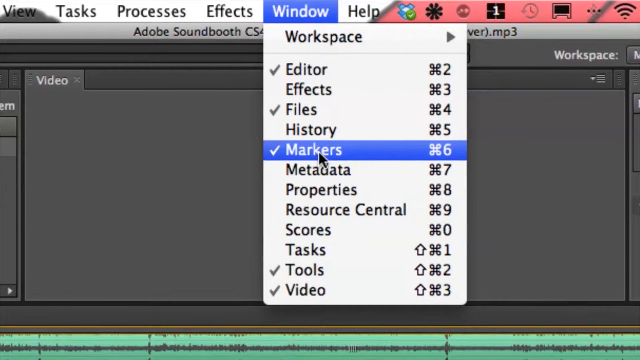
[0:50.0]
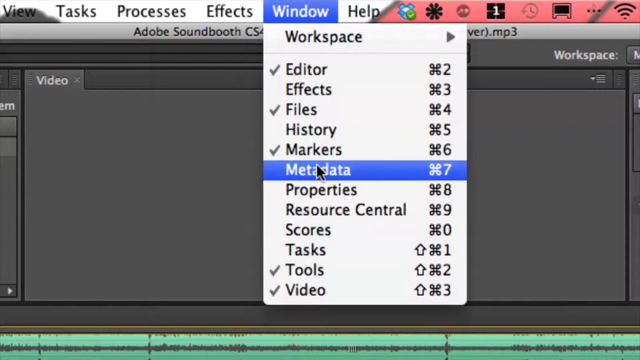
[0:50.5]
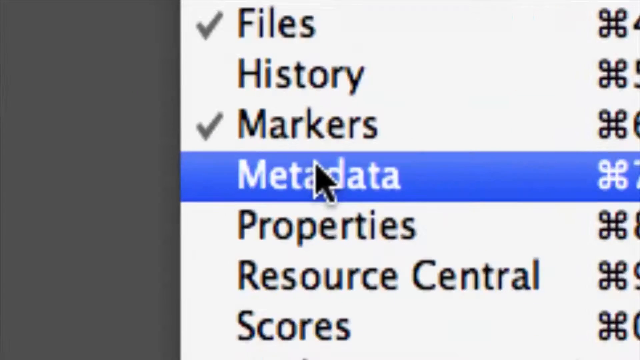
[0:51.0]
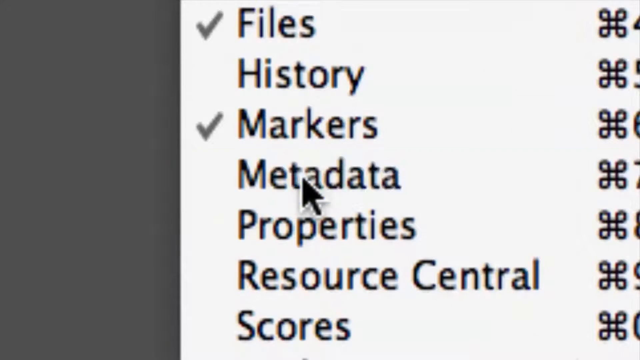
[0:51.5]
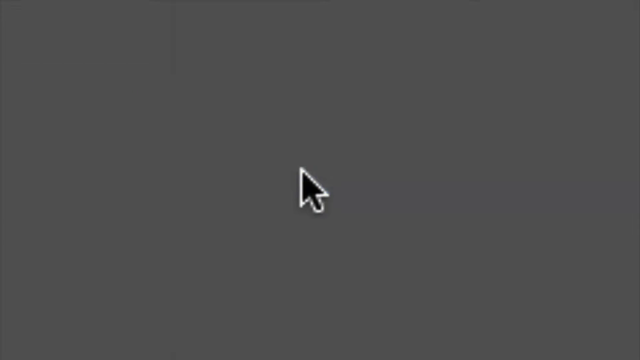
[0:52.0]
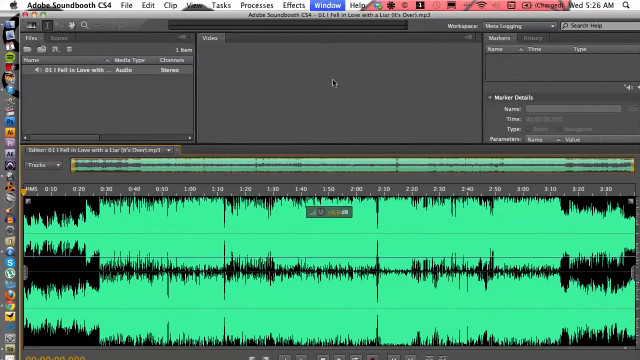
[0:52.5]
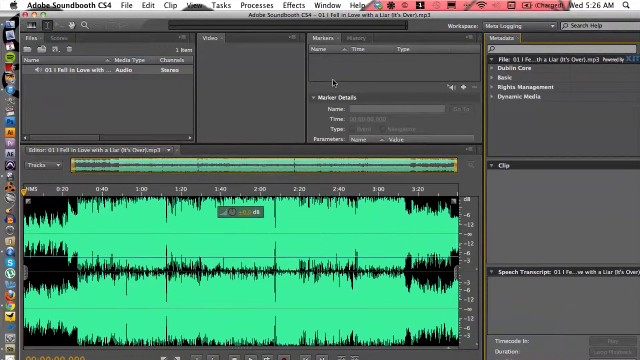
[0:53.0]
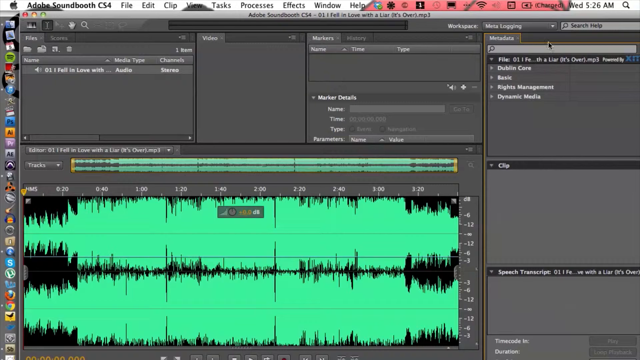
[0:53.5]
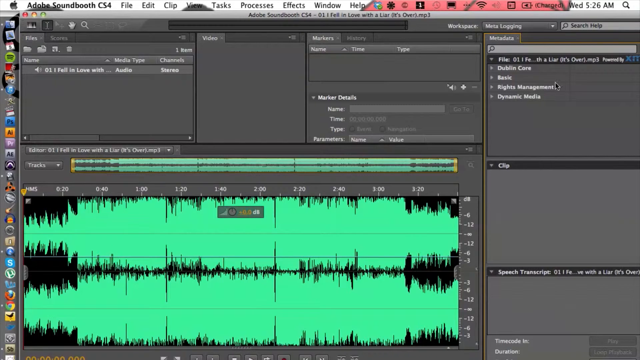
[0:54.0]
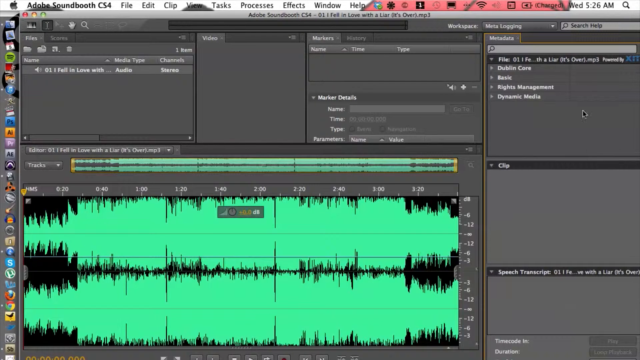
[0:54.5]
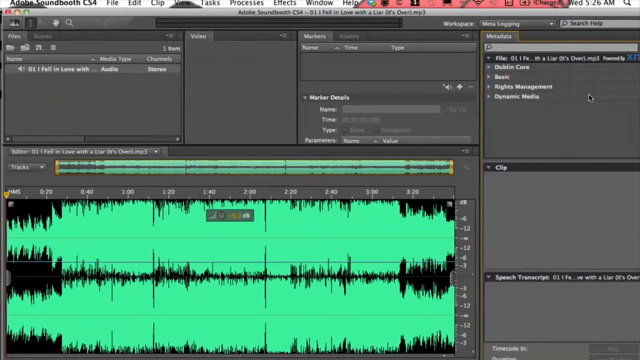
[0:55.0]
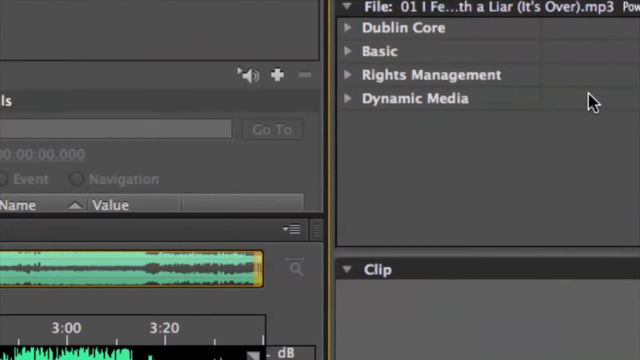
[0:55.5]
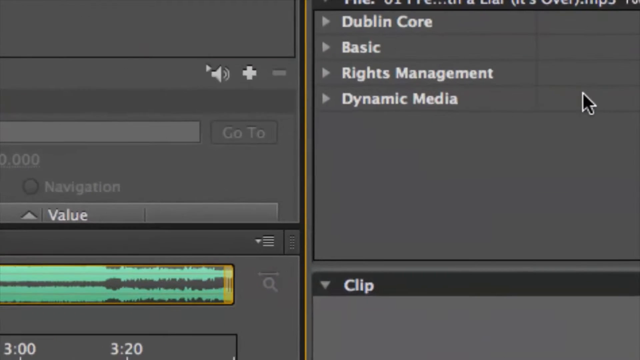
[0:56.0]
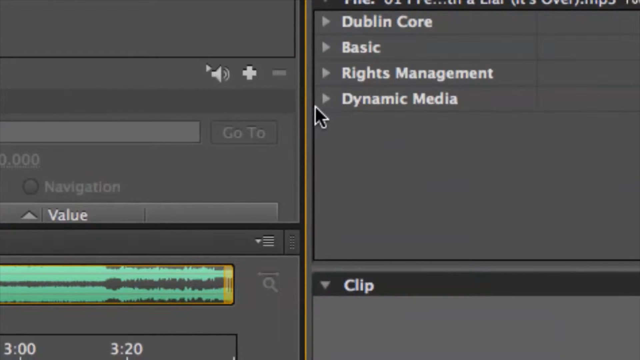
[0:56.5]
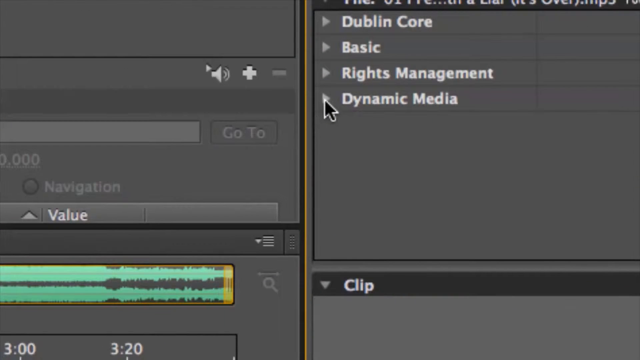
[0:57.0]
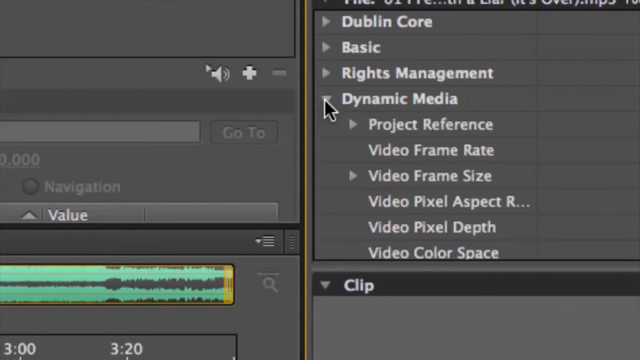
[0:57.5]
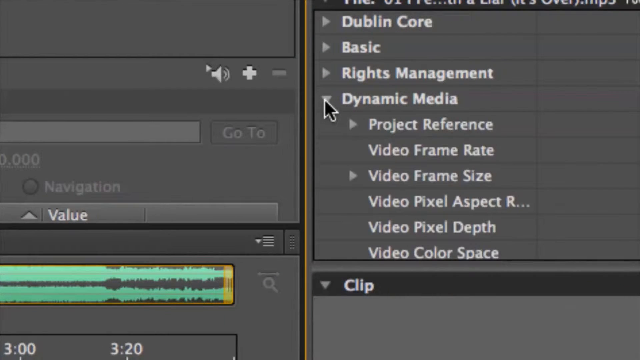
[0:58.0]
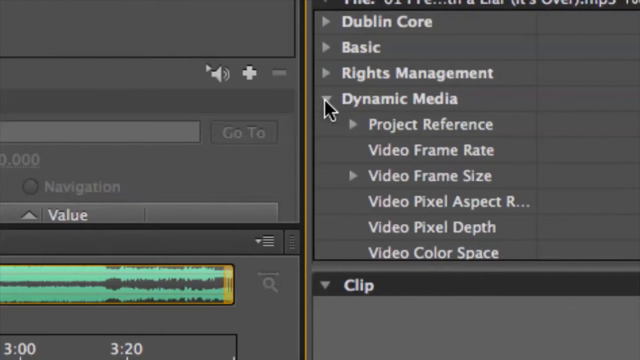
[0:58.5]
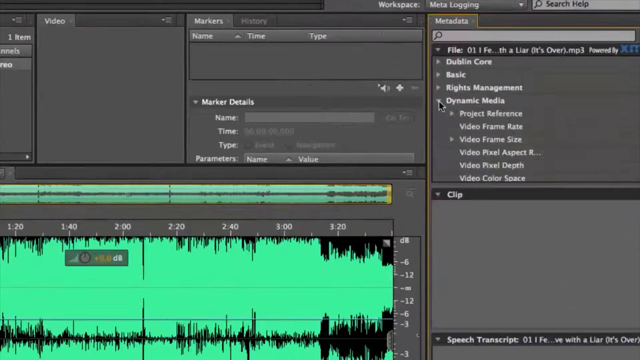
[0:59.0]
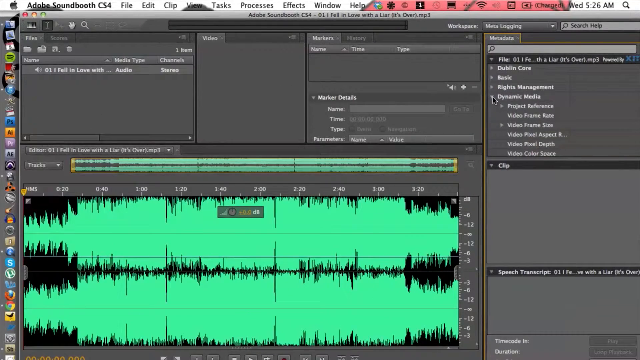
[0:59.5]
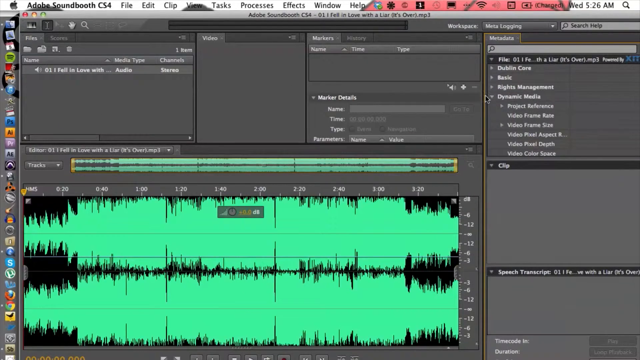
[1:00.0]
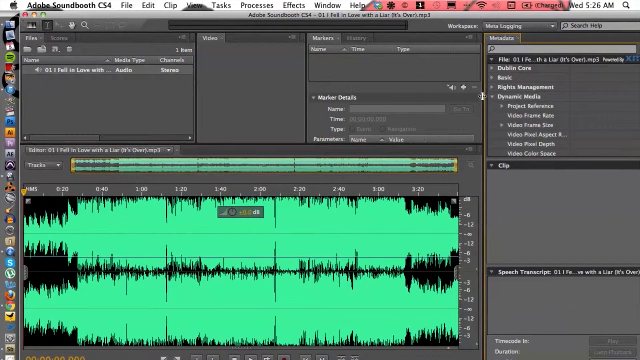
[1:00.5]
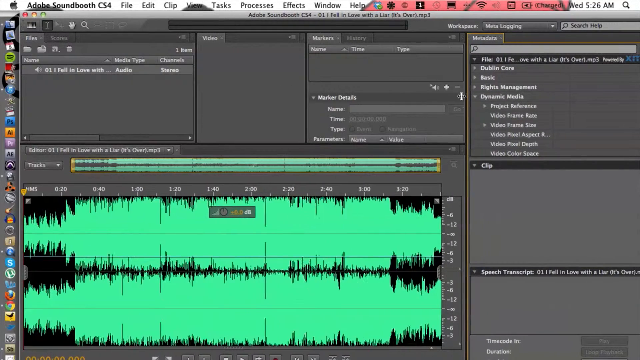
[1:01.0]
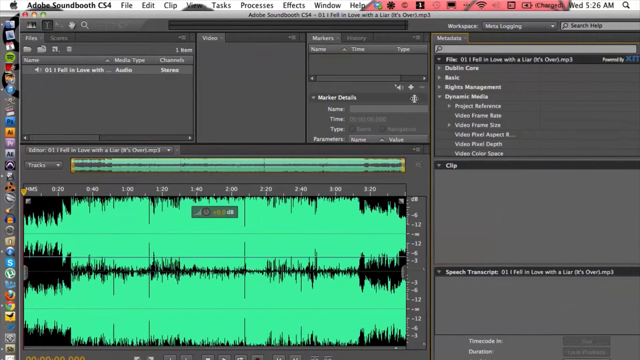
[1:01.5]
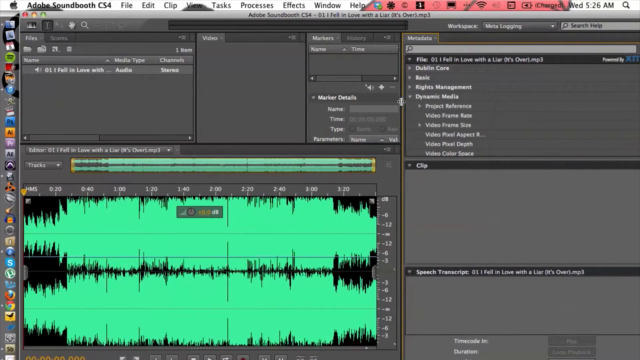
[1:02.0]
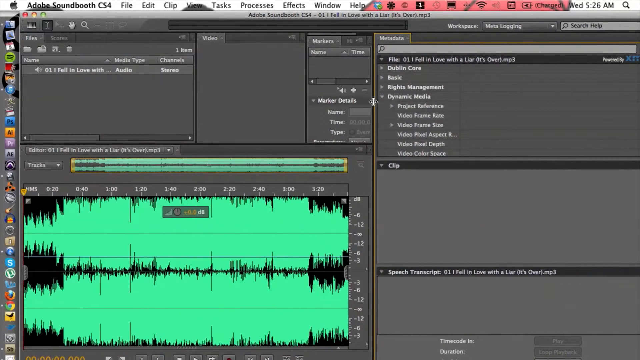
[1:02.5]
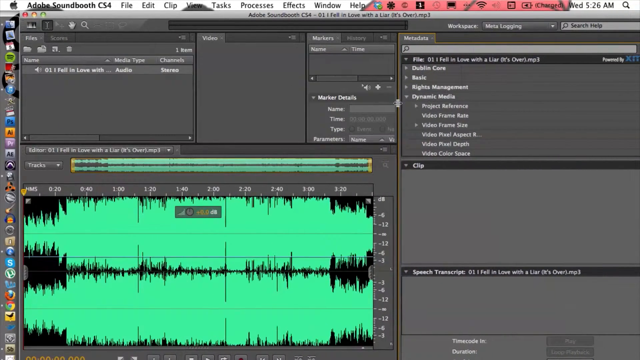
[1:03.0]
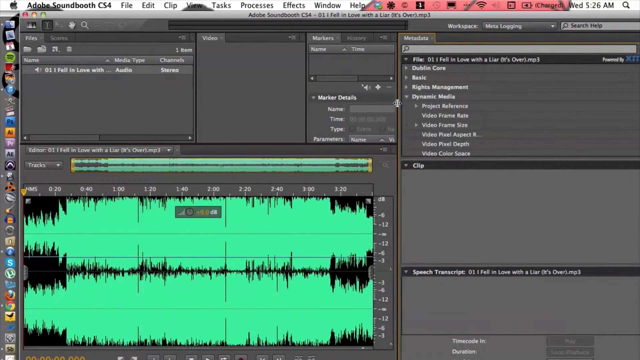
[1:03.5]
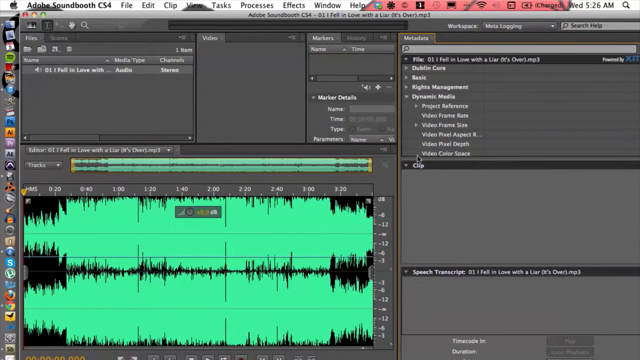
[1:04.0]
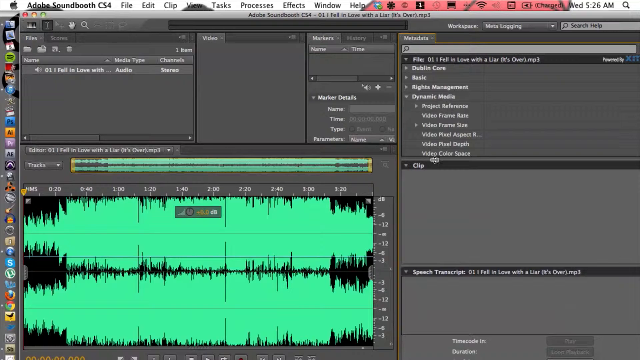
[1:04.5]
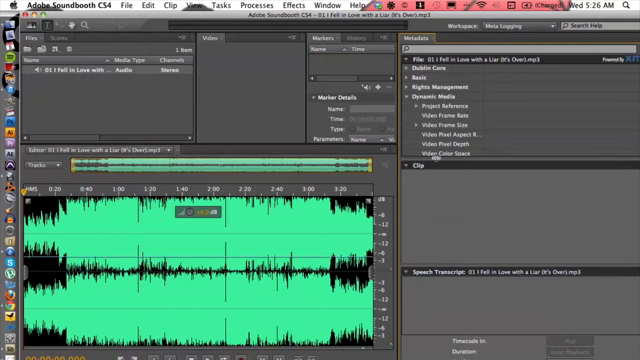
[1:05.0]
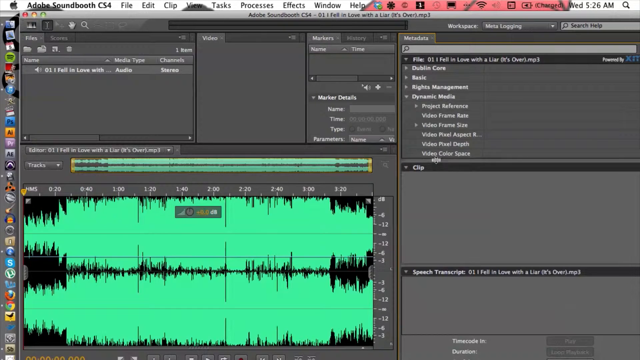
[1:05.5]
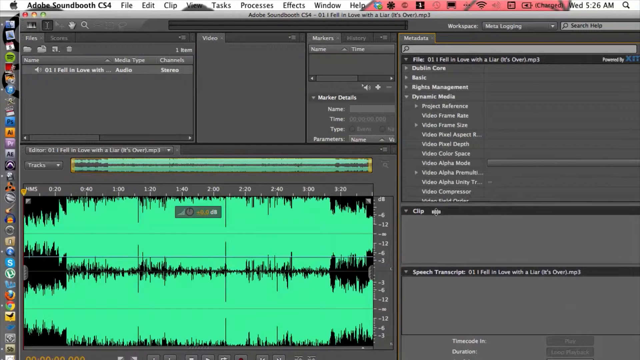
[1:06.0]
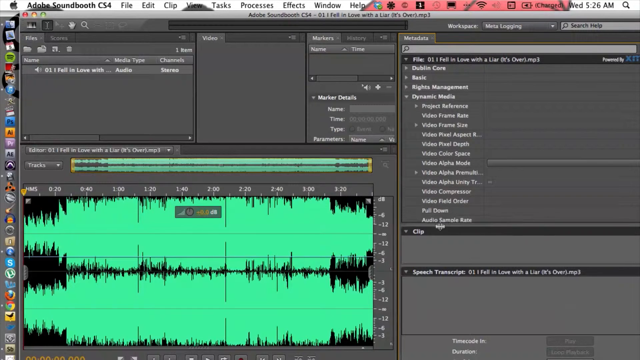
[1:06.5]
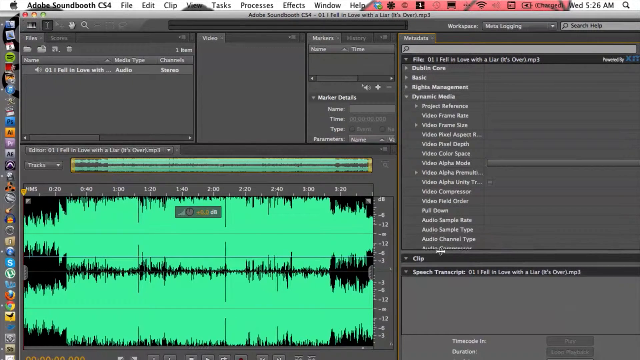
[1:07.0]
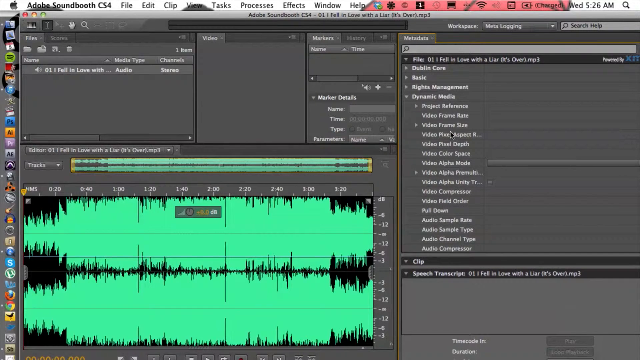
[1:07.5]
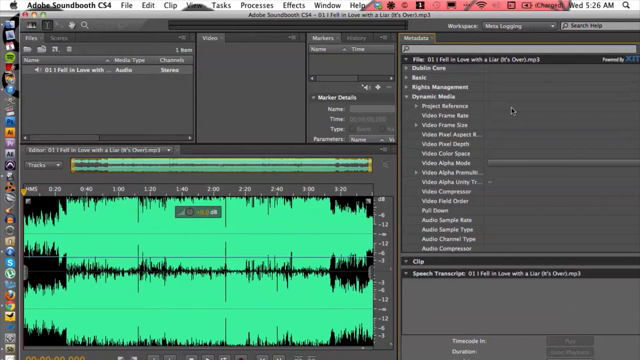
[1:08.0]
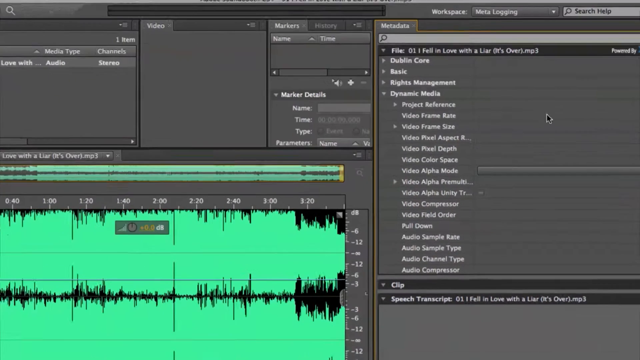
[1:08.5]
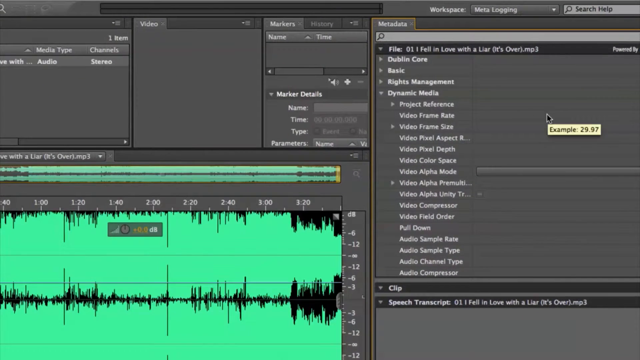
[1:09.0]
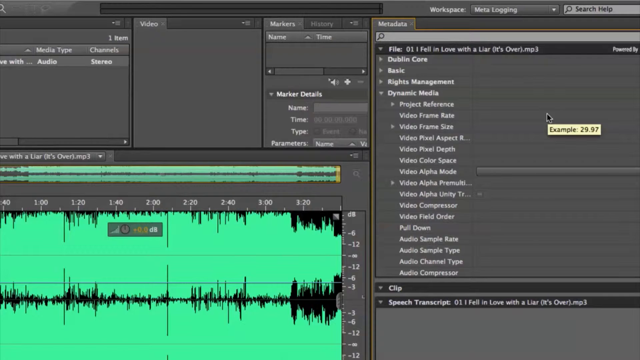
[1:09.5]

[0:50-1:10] The Window menu at the top is highlighted. The cursor goes down to Metadata and then highlights Markers. Metadata is zoomed in on, clicked, and the view zooms out. The cursor kind of moves around, and Dynamic Media appears; a dropdown is opened. A window moves in to the left, and a window opens up on the right. Metadata is kind of scrolled down towards clip. The metadata window on the right side is highlighted in yellow and has sections for File, Duplin Core, Basic, Rights Management and Dynamic Media. Dynamic Media is clicked and shows project reference, video frame rate, video frame size, video pixel aspect ratio, video pixel depth and video color space. The right-hand side opens up, and the cursor clicks and drags a clip down.